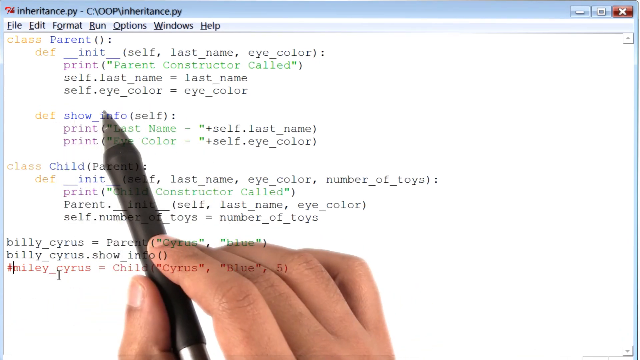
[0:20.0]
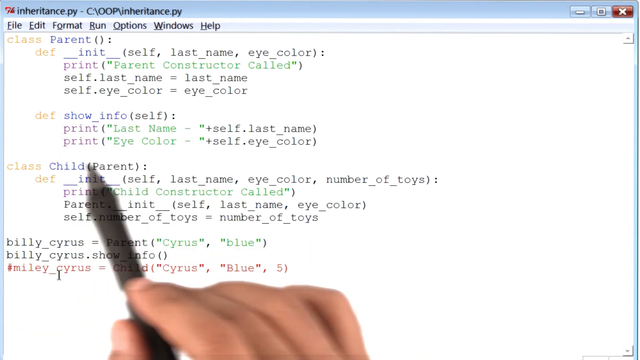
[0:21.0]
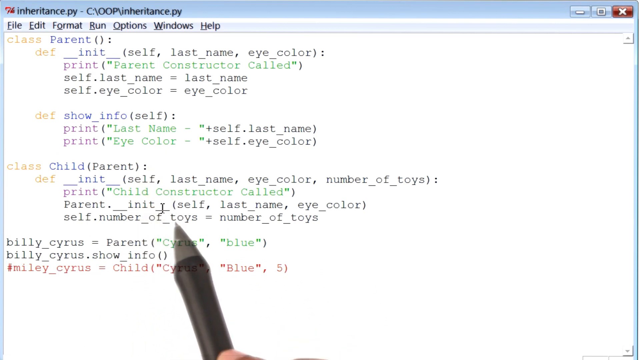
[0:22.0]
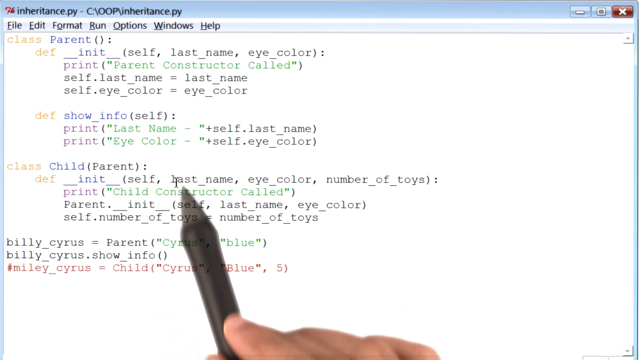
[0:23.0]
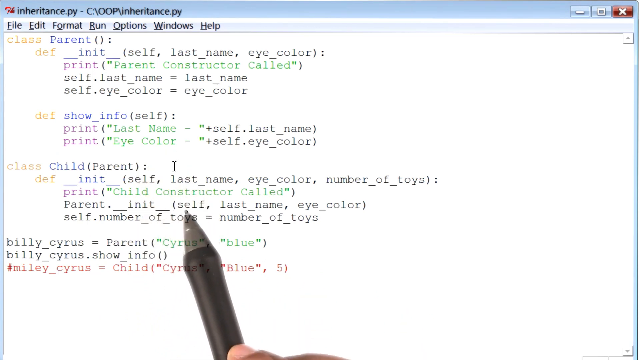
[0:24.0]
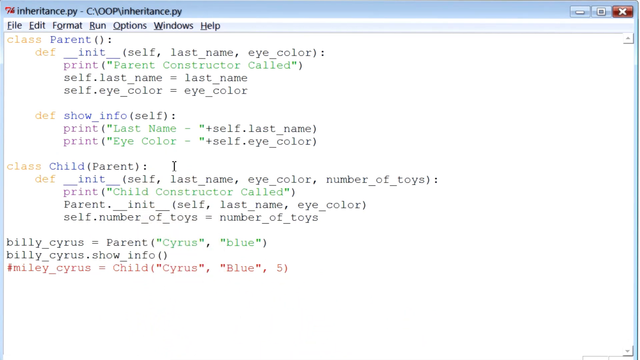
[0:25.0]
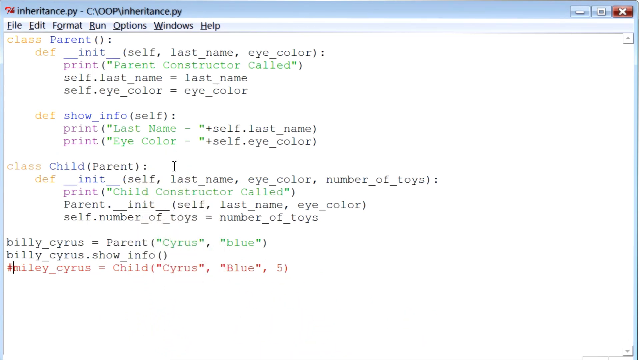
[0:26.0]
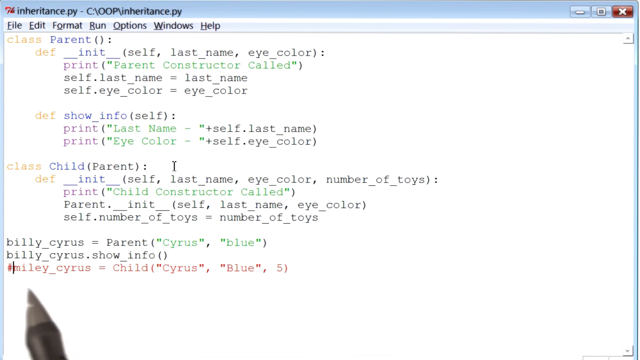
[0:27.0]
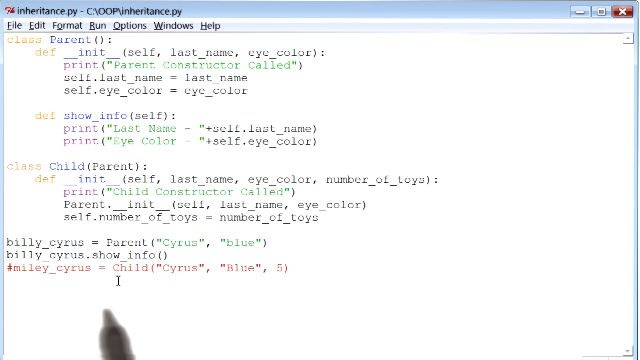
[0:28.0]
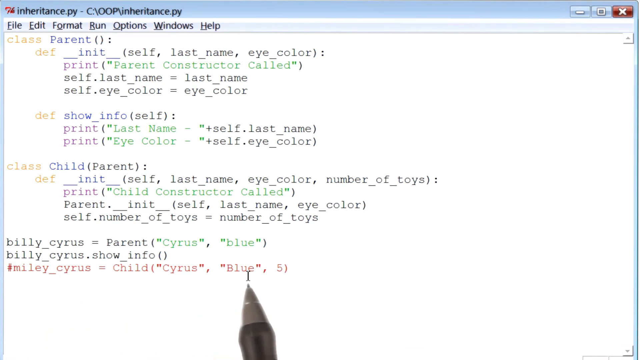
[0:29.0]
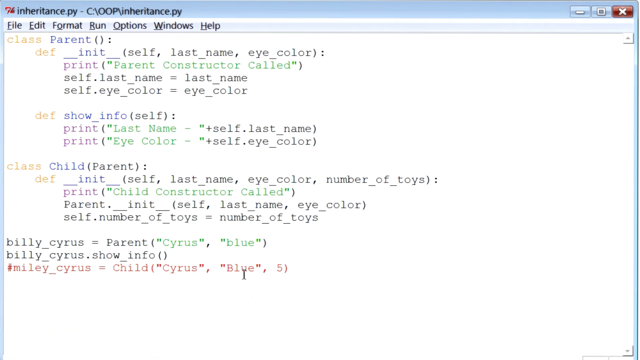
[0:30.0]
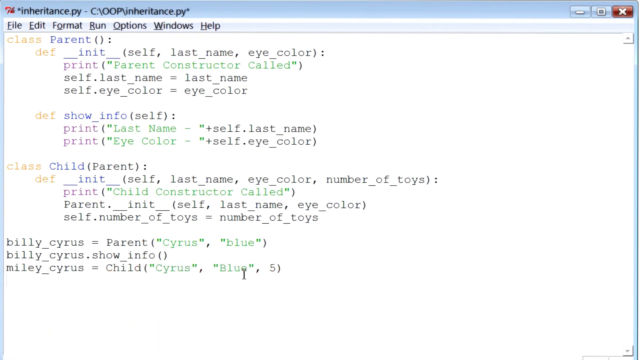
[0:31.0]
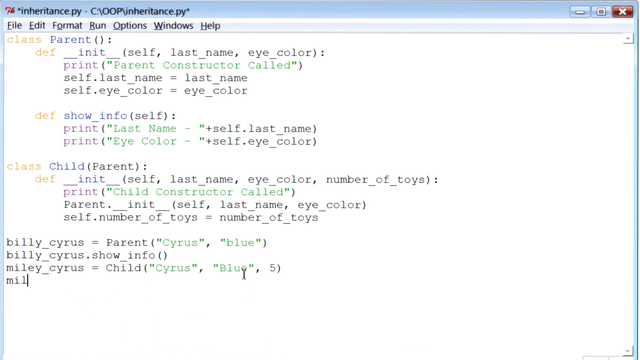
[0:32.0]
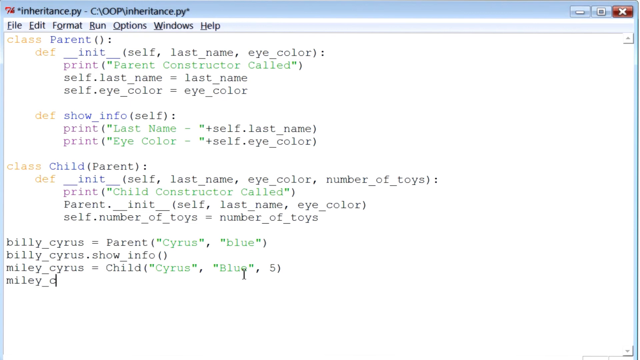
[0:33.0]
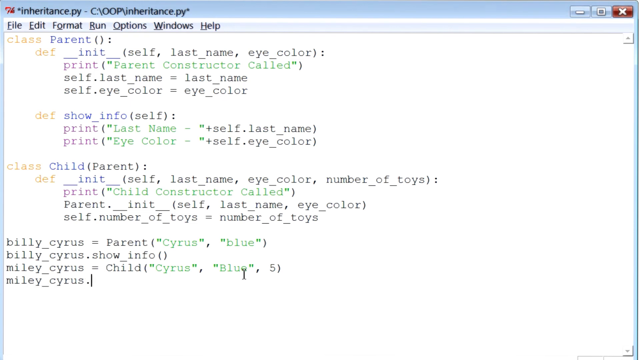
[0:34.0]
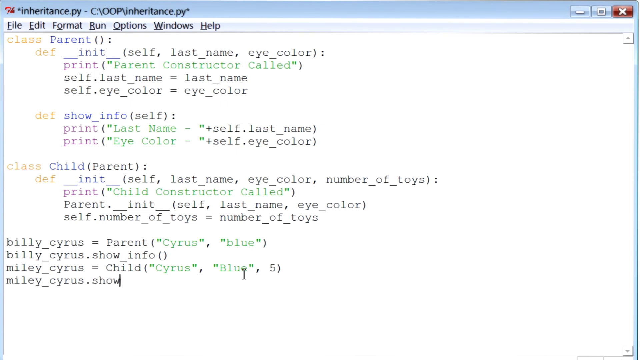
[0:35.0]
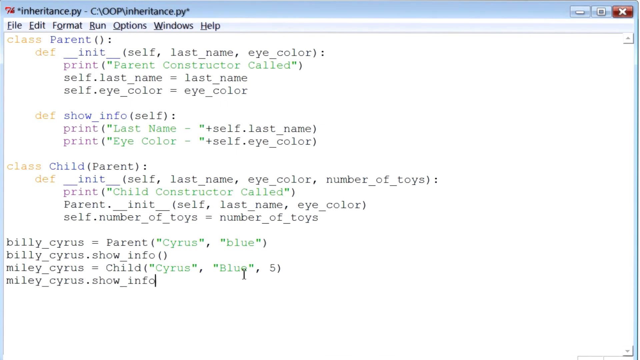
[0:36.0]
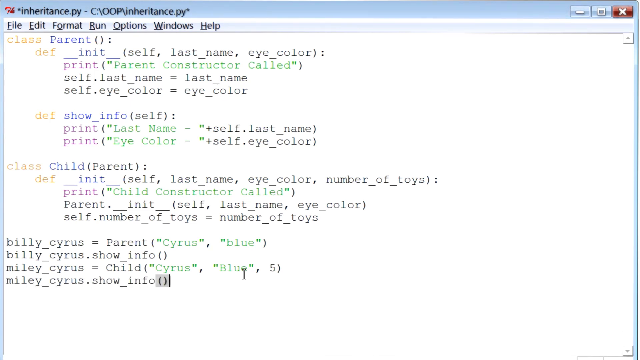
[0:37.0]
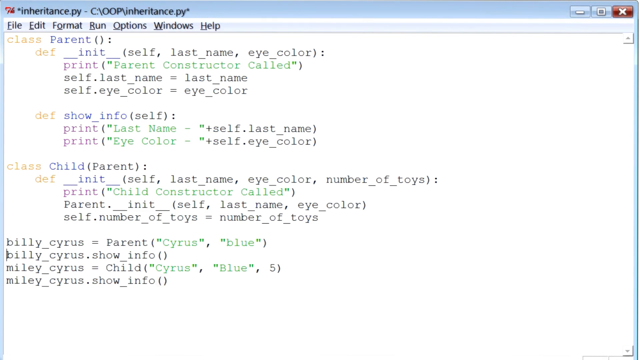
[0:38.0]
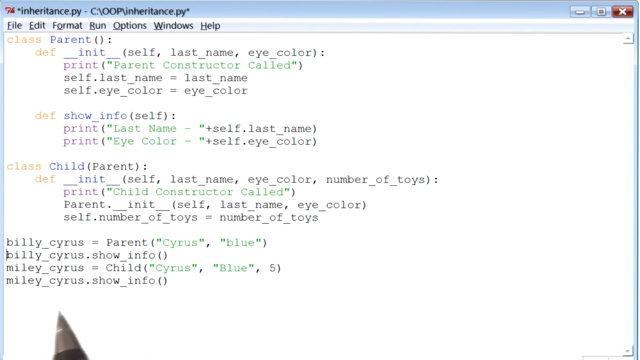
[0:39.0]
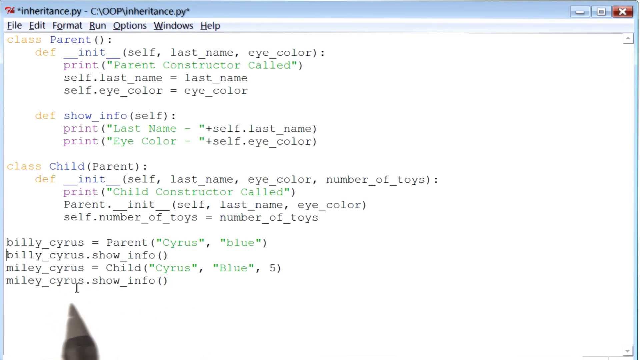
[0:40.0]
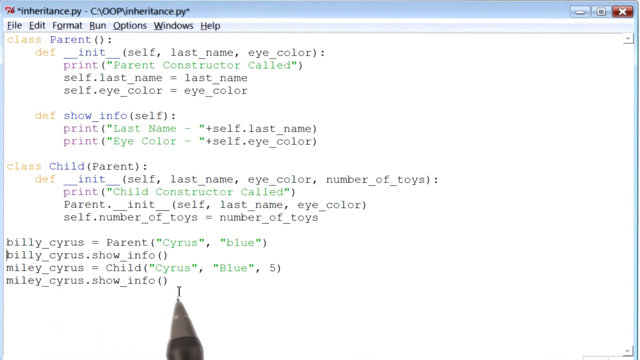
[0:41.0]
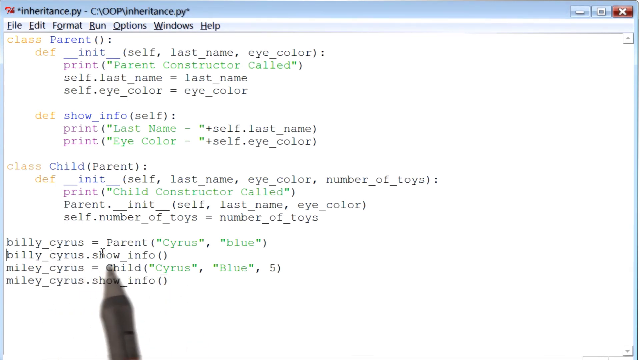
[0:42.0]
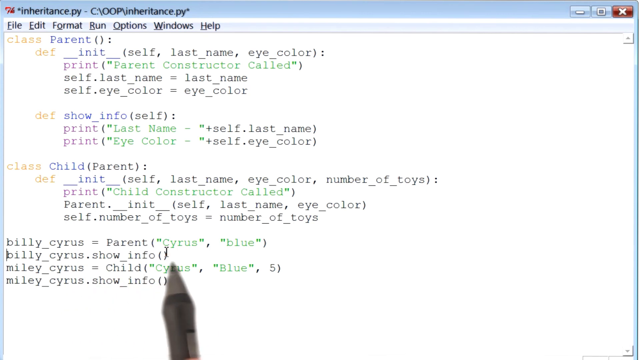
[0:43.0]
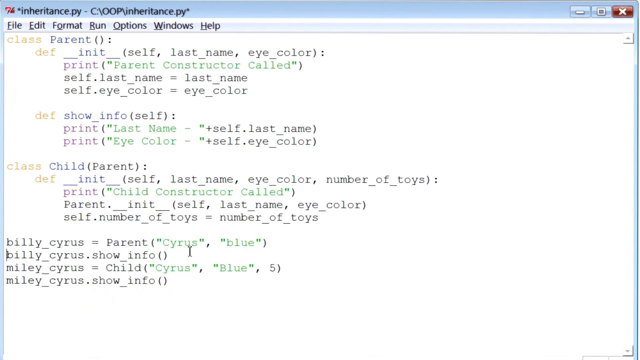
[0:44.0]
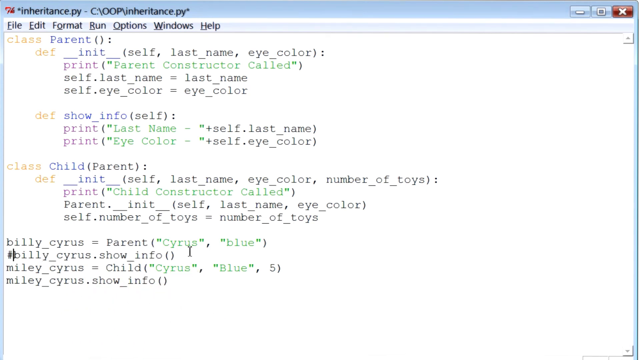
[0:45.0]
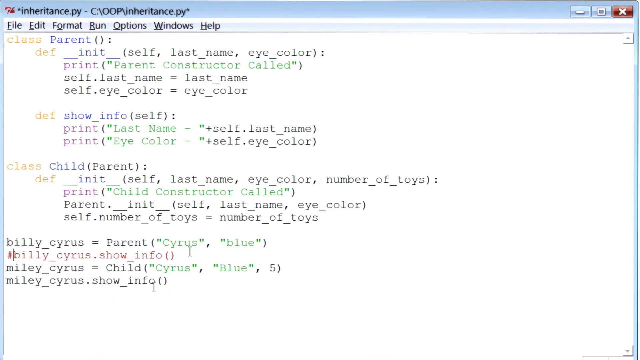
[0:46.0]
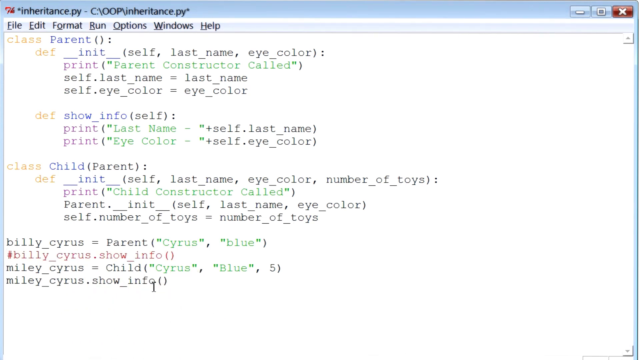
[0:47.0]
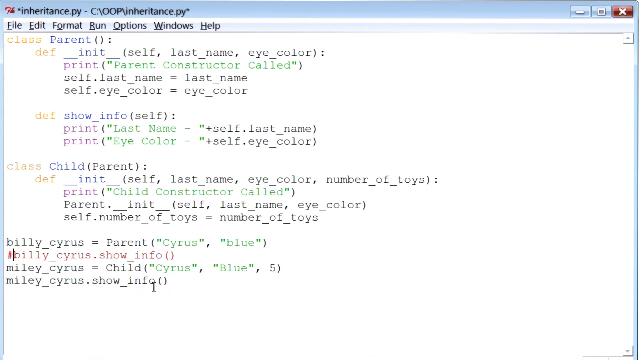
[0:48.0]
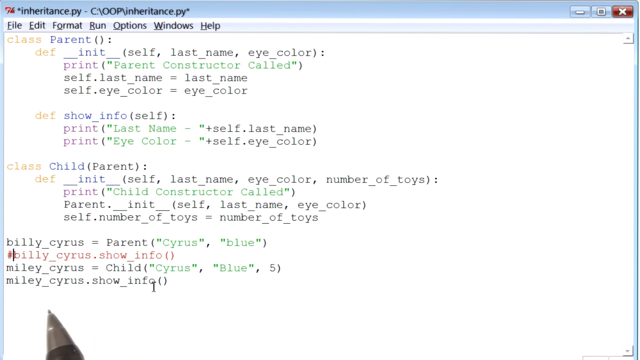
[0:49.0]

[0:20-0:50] The video appears to be teaching coding in a document called "inheritance.py". The code lists a parent with self, last name and eye color, and a child with self, last name, eye color and number of toys. At the bottom is an example with Billy Cyrus as the parent and Miley Cyrus as the child. A tan male hand holding what is either a real pen or a stylus moves around over the text, pointing things out; it goes over Miley Cyrus's name at the bottom, almost as though underlining it, though it apparently does not. The code looks like old-fashioned coding.